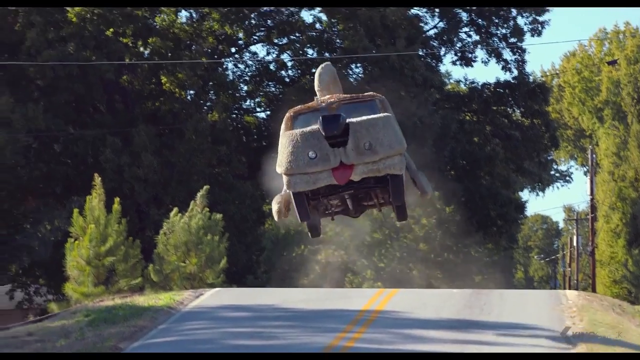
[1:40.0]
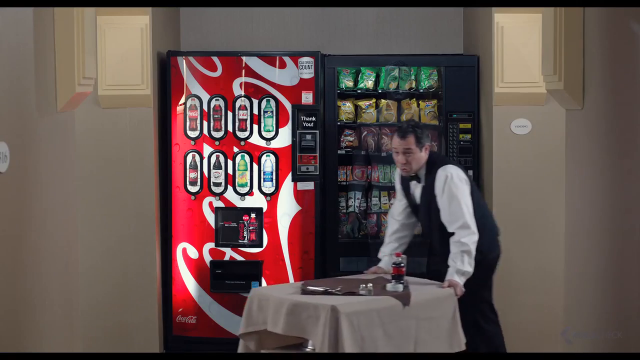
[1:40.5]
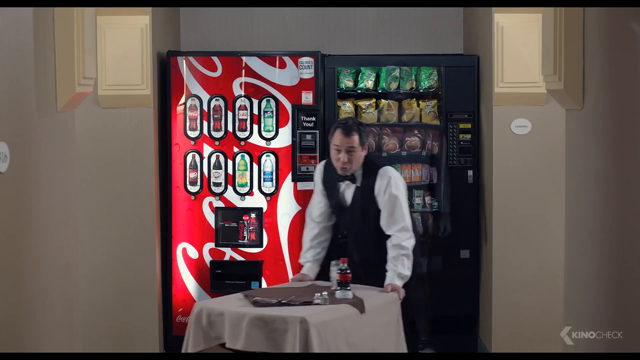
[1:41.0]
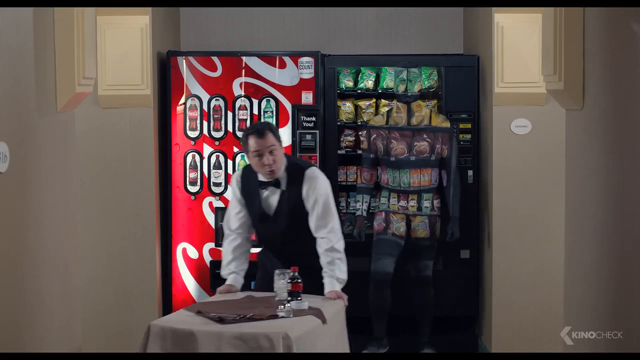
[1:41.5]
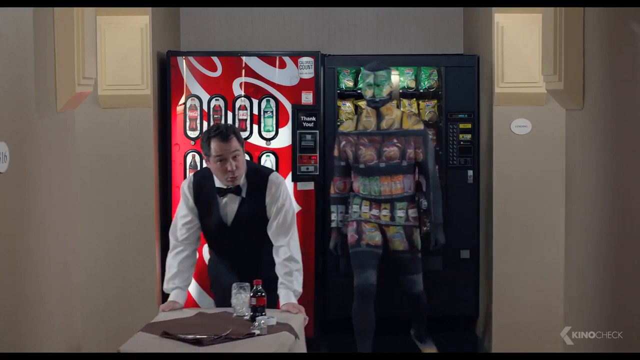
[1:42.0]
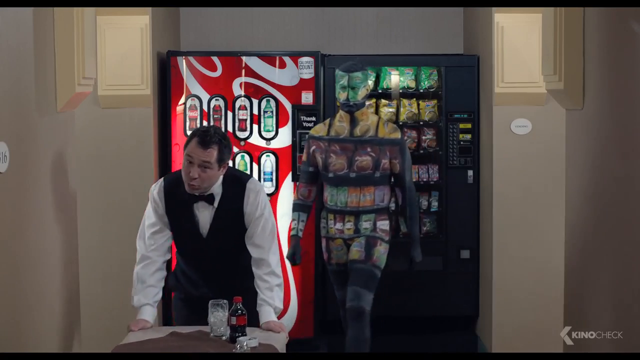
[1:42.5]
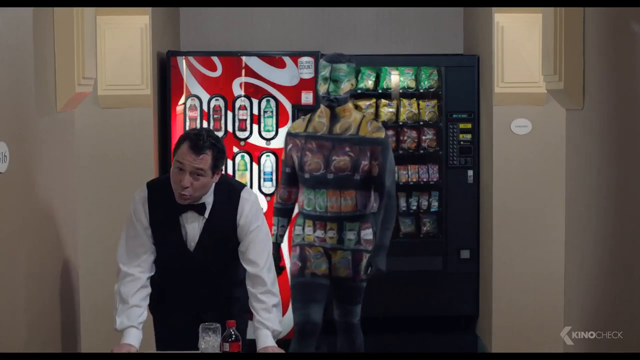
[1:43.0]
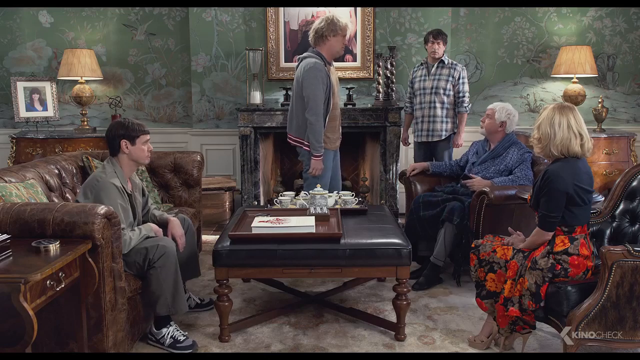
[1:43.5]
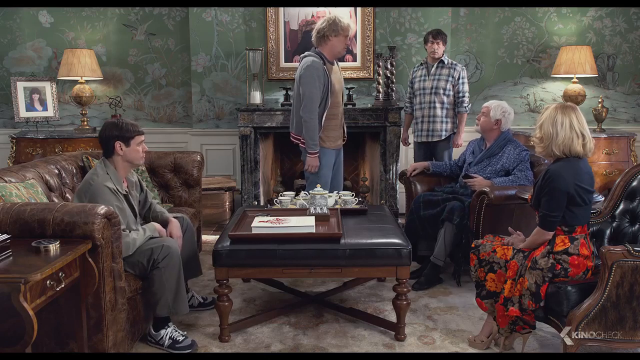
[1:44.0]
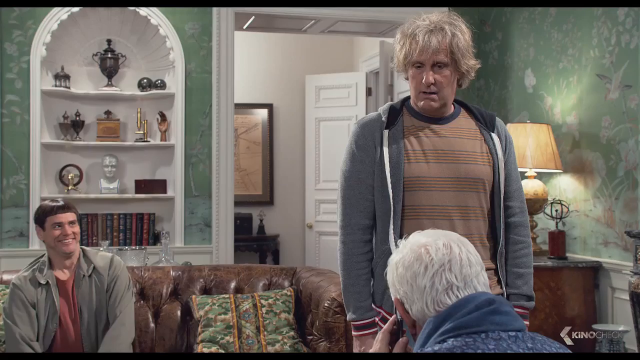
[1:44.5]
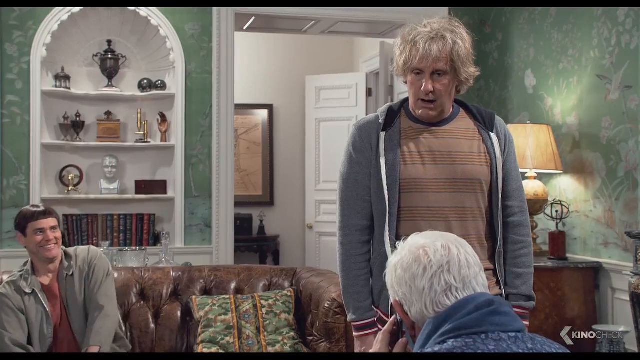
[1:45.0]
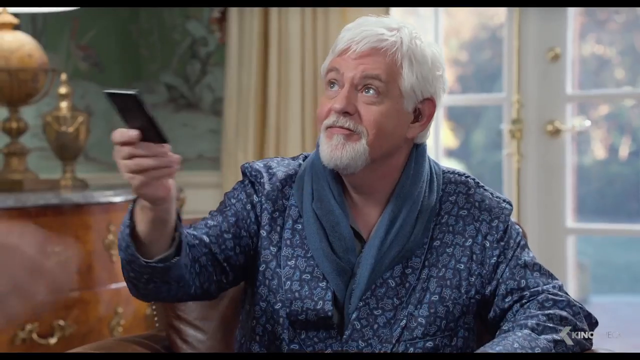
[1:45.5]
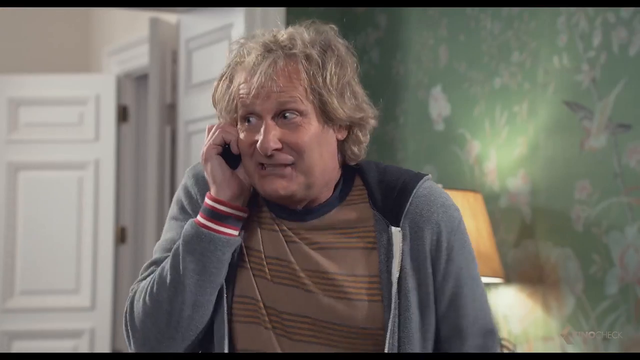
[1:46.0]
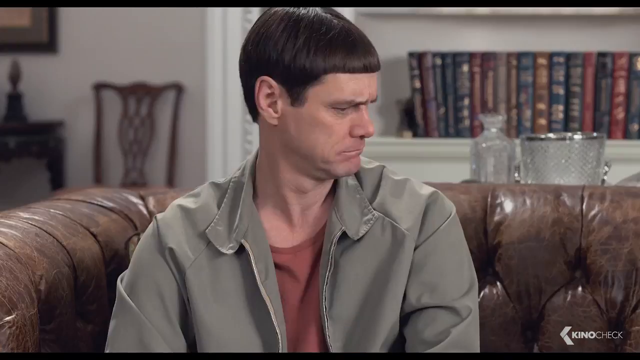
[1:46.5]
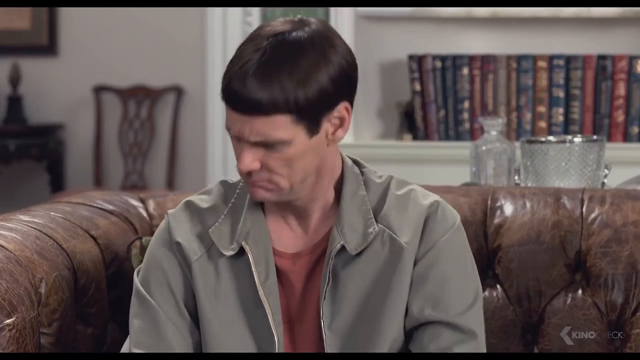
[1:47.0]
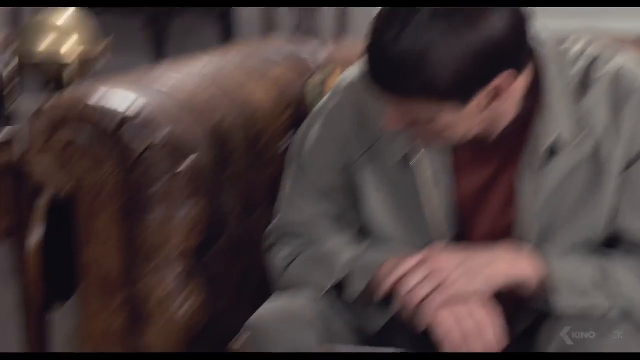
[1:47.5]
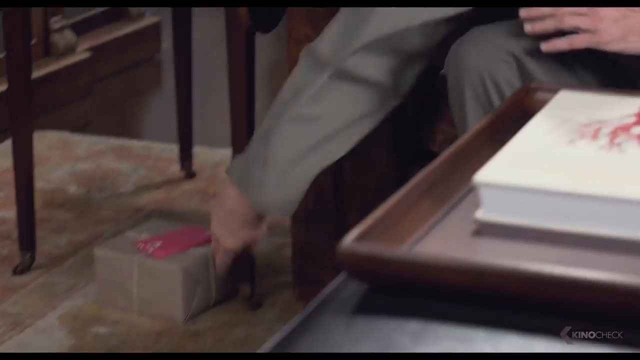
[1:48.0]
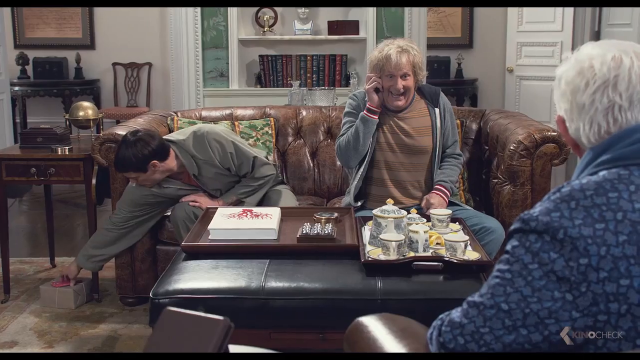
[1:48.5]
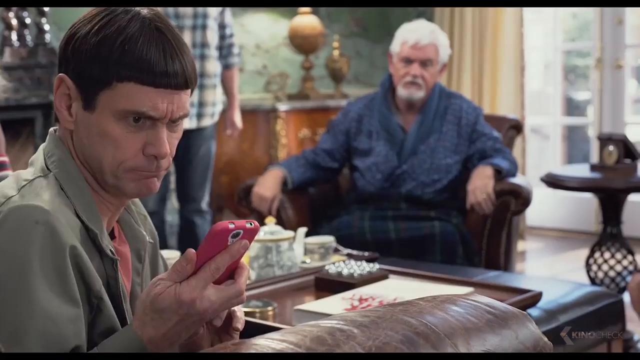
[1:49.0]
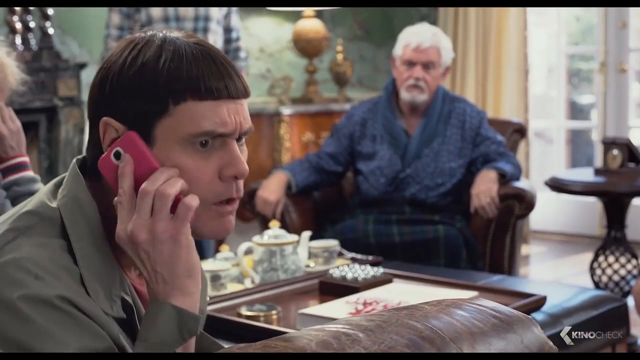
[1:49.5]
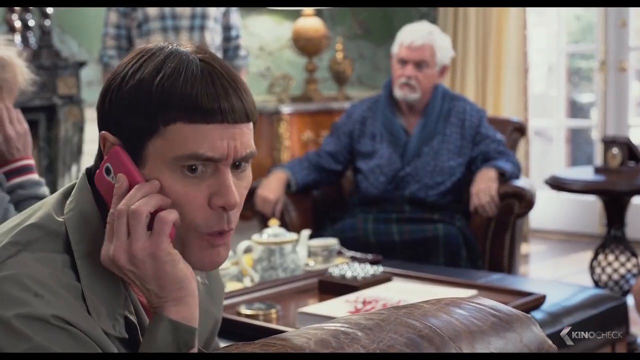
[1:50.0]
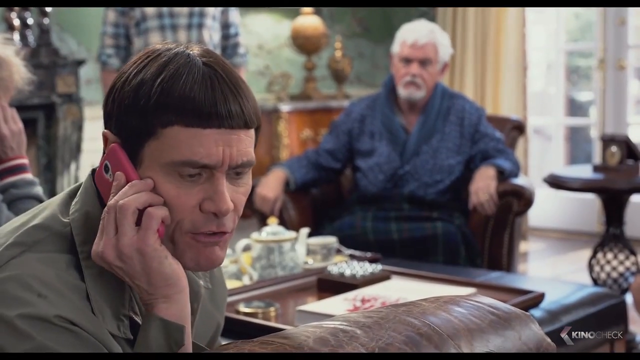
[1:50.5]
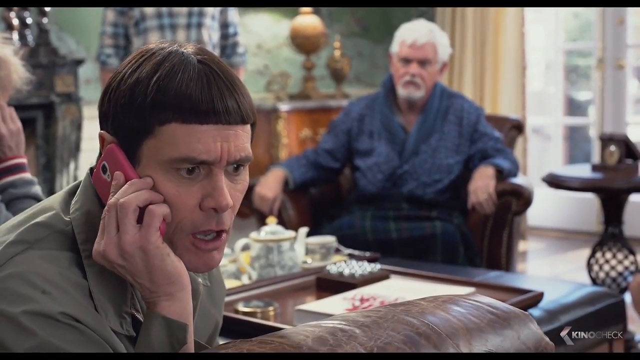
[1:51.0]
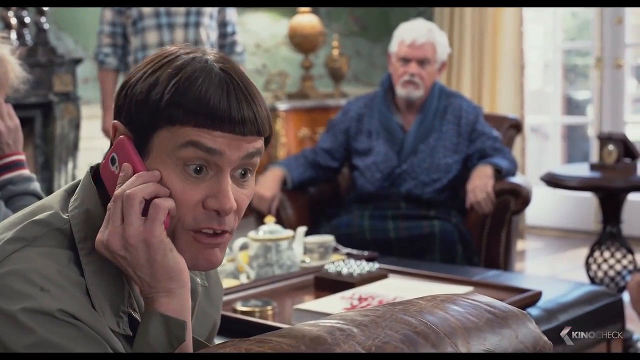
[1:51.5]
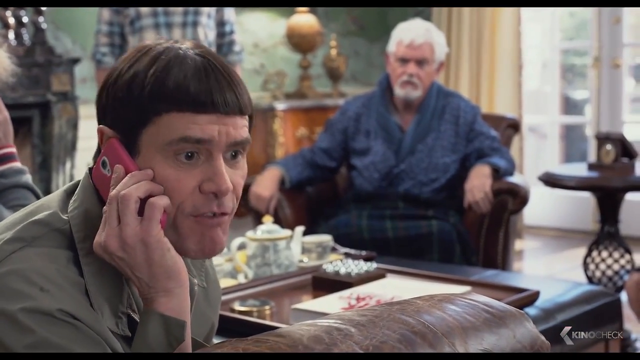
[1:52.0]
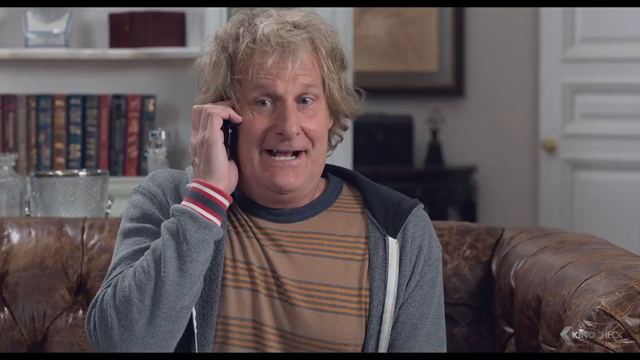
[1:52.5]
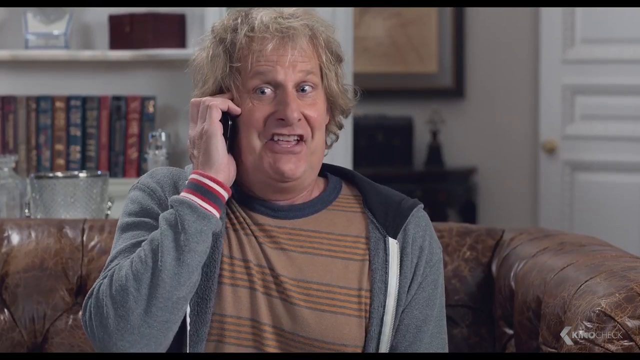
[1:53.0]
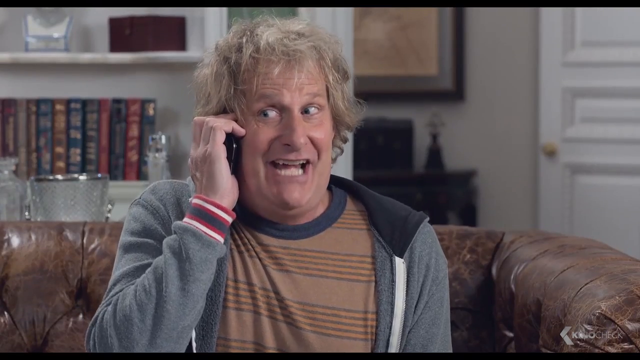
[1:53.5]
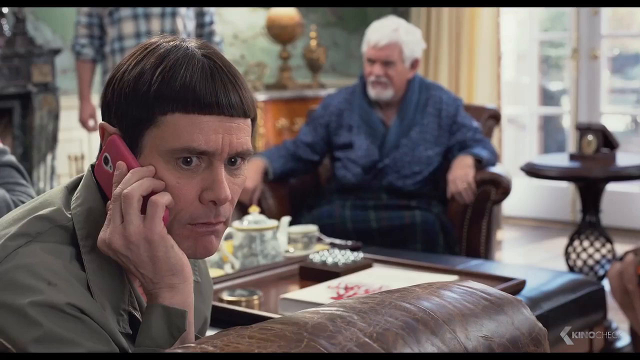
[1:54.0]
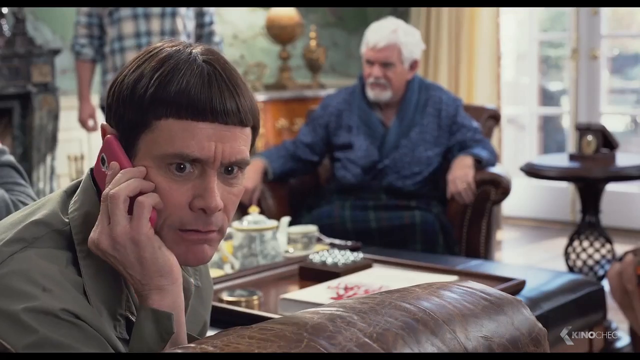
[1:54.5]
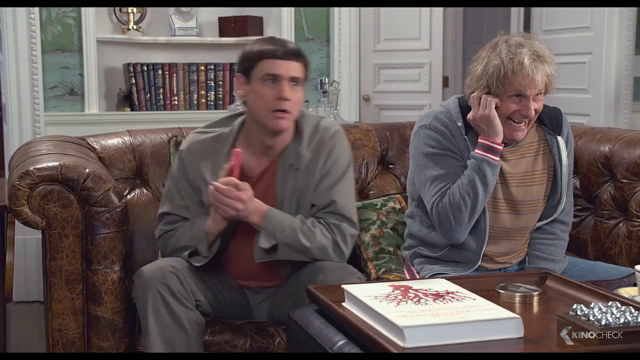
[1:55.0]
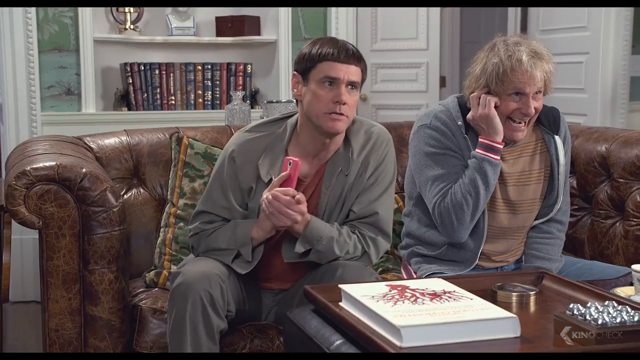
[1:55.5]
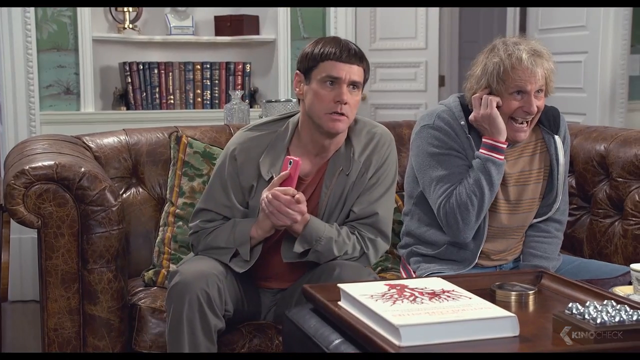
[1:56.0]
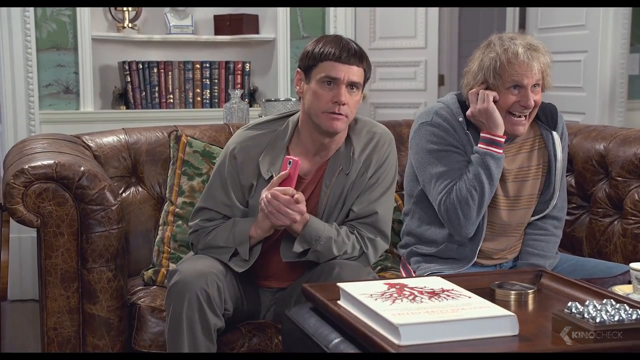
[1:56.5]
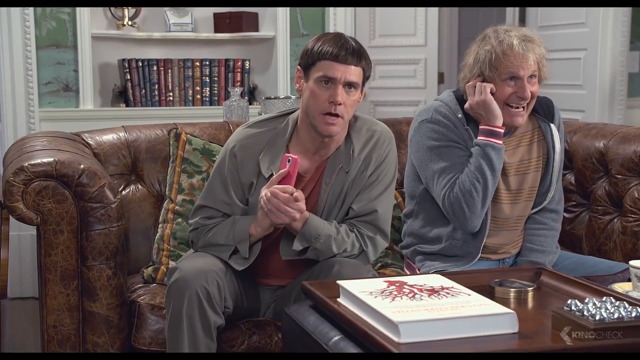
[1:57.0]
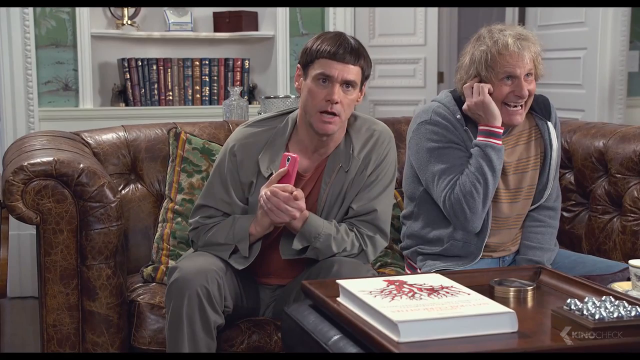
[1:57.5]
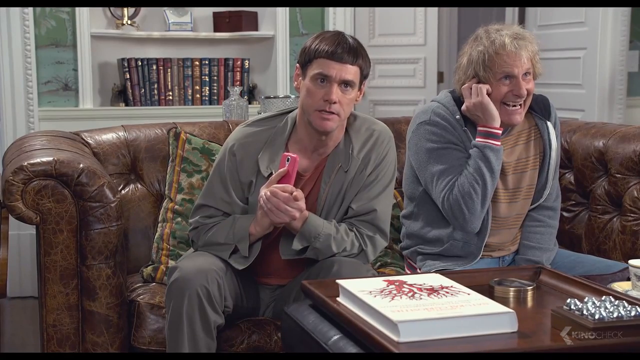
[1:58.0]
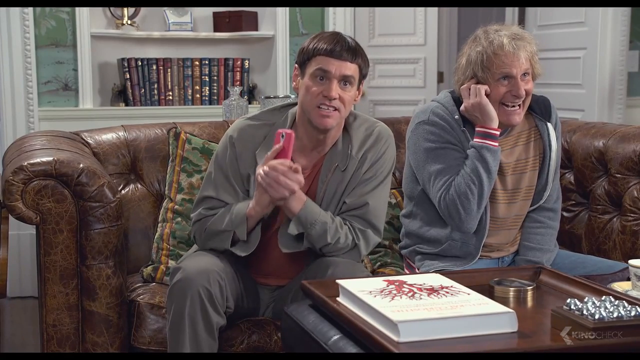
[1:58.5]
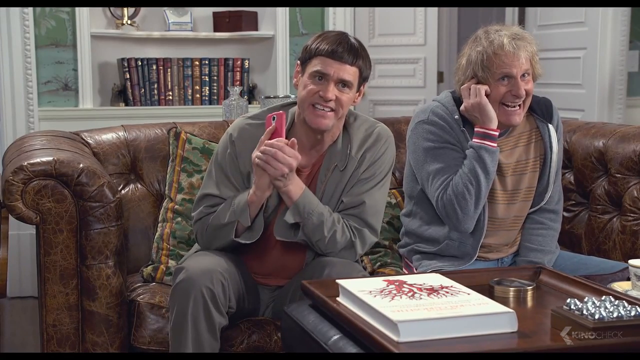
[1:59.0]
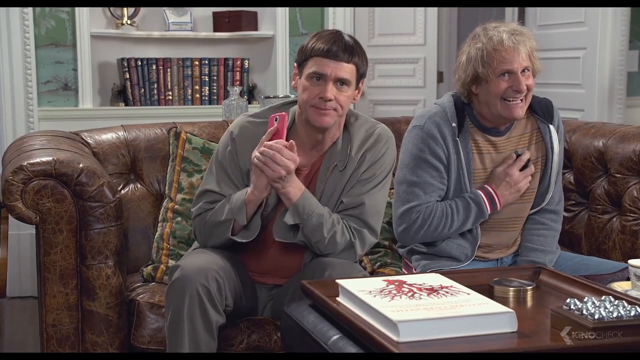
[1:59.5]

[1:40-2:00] The video advertises that Jeff Daniels is in the movie. The older man is with a woman who won Mrs. Rhode Island; she has brown hair, a red dress, and a Mrs. Rhode Island ribbon wrapped around her. The two men then ride some sort of deer statue, with Jim Carrey spanking the deer. Next they drive what is maybe a pest control vehicle with fur on it, and the car jumps over a ramp. A butler appears next to some vending machines. In an old home with two older people, the two men talk to each other on cell phones.